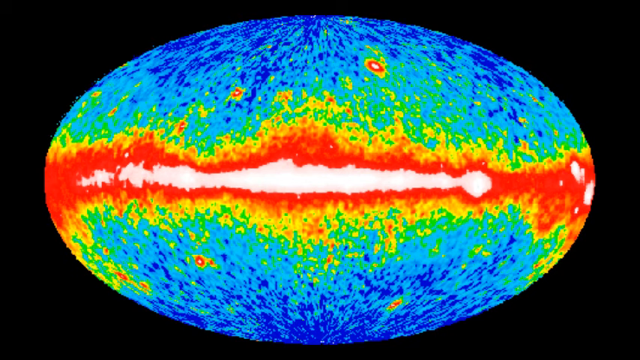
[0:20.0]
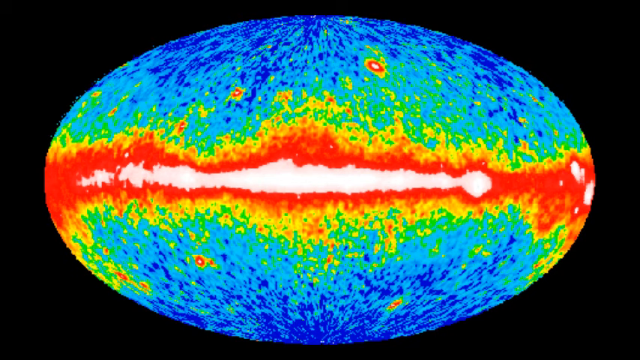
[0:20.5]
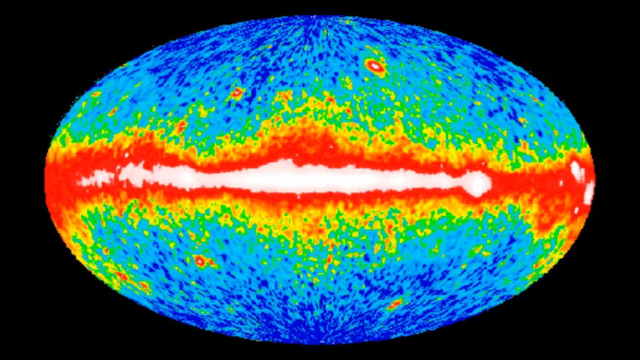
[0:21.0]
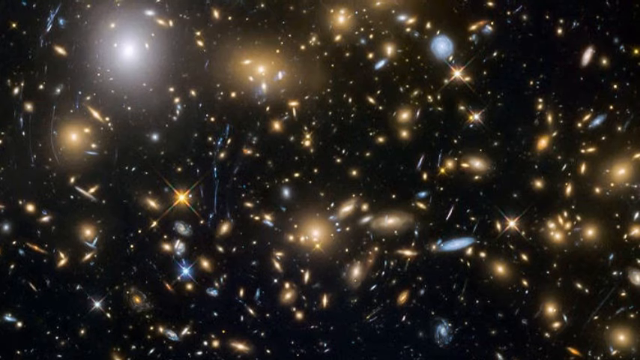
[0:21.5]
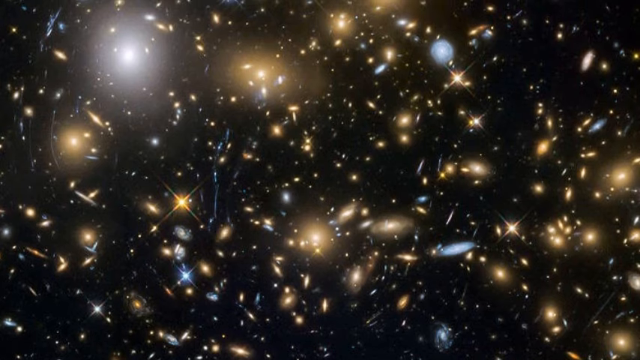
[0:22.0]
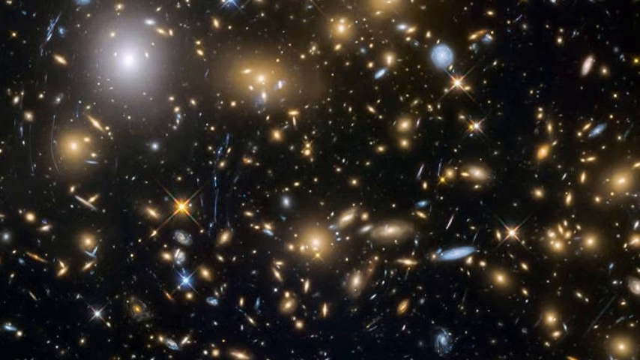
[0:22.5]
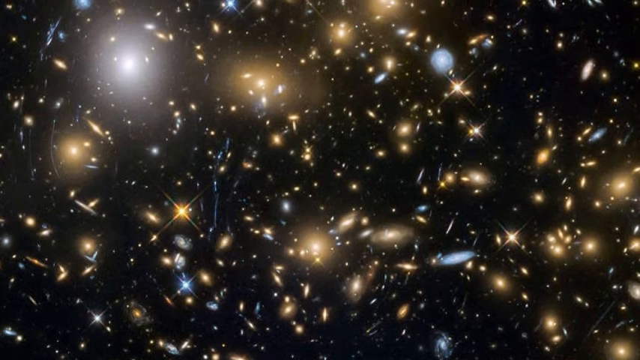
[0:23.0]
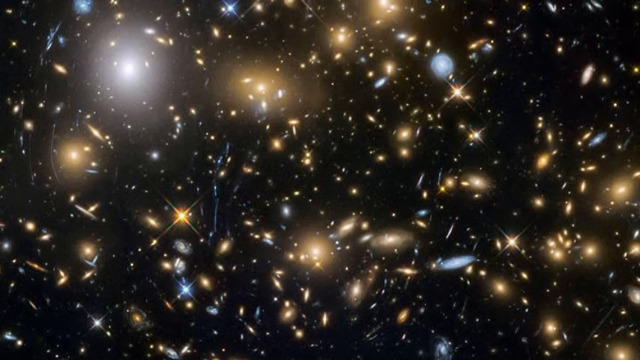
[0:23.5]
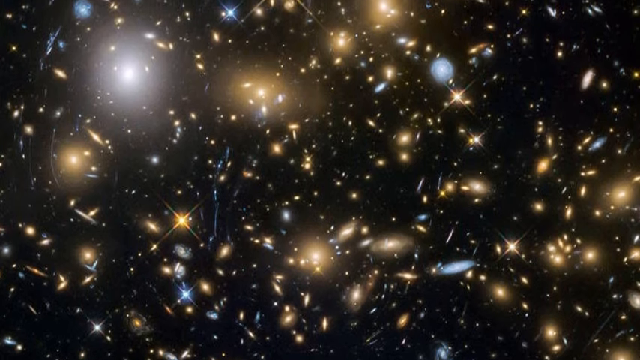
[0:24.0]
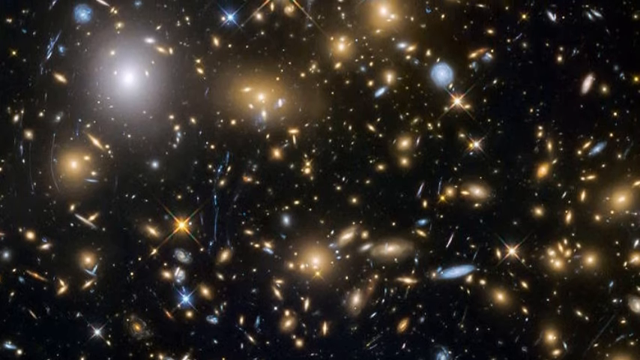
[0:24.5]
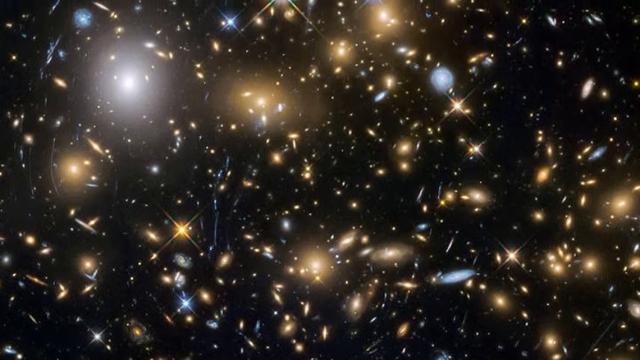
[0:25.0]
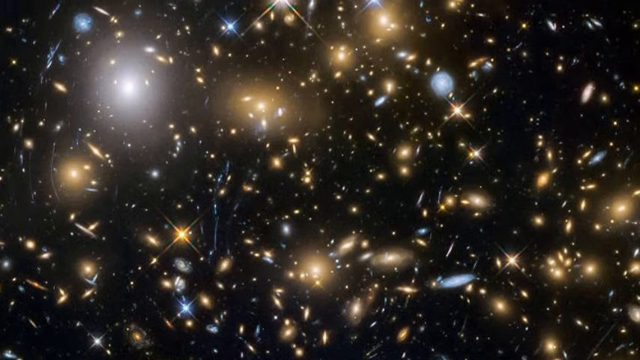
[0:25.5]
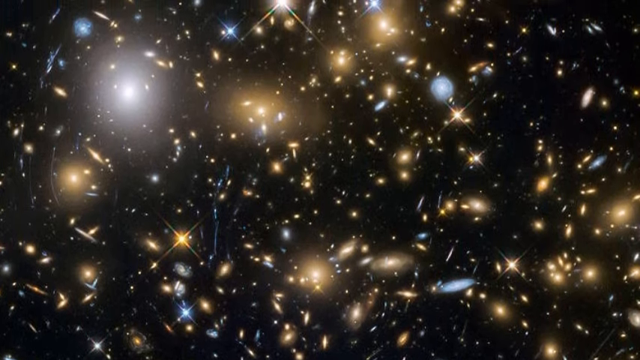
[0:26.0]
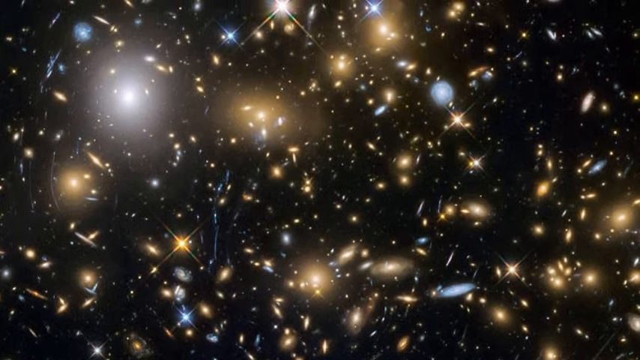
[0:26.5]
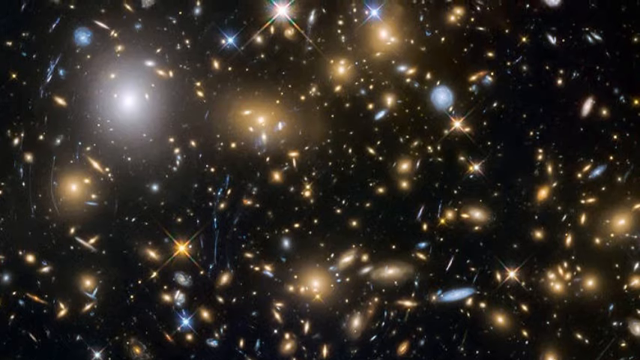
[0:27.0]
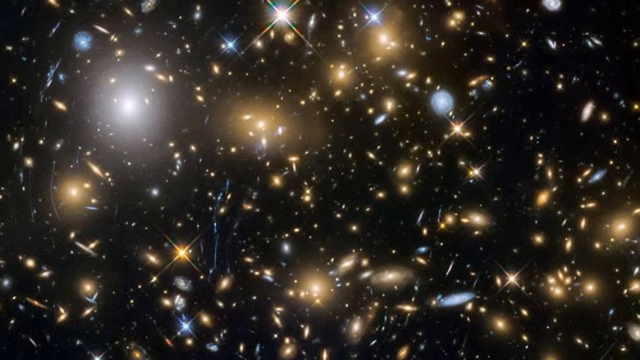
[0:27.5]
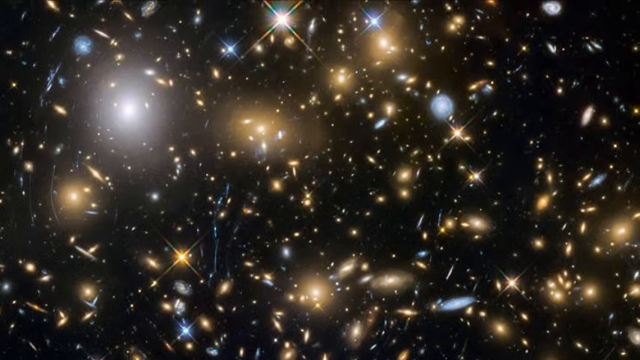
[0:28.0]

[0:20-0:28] The black background with the oblong circle is on screen. White runs across it, starting about an inch in from the left as a thin line, and there are a couple of white spots on the right side. A red border surrounds that, then a yellow border, with some of the yellow going up into the light blue; the light blue kind of overlaps with the dark blue that runs across the top and bottom. The video then goes back to the yellow and blue lights spread across the whole frame, some bigger and some smaller. There are probably about 10 blue ones and a bunch of white ones on the black background as the shot slowly pans up.